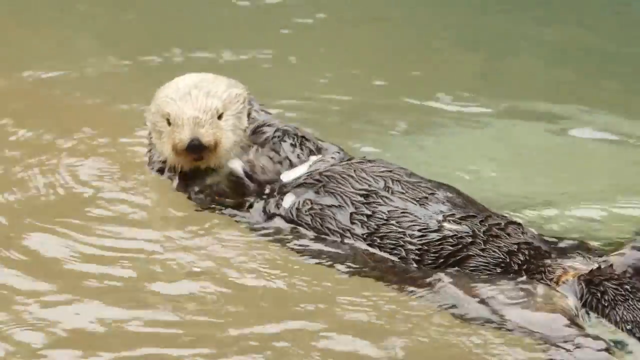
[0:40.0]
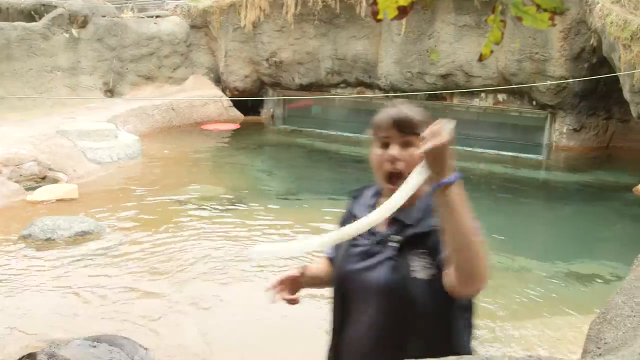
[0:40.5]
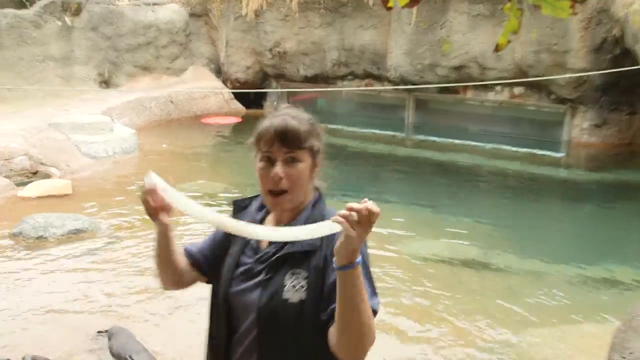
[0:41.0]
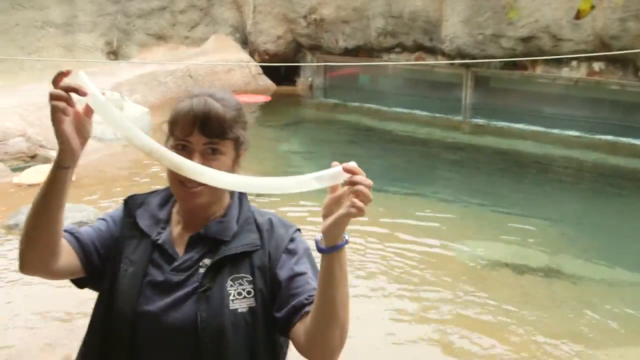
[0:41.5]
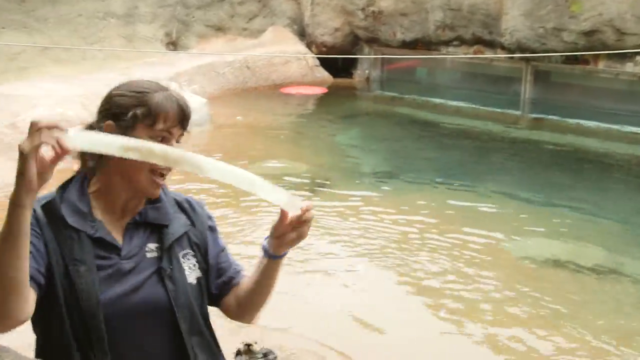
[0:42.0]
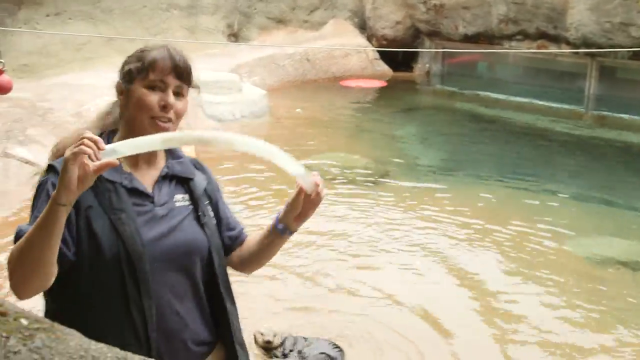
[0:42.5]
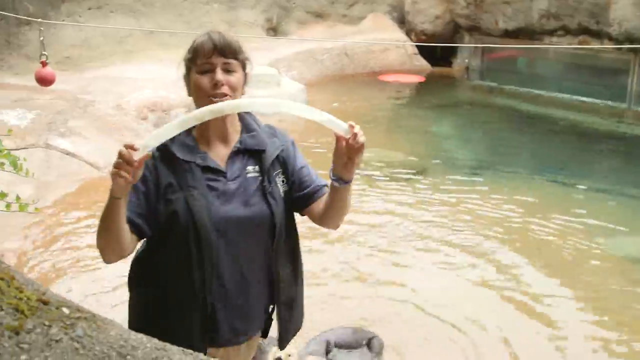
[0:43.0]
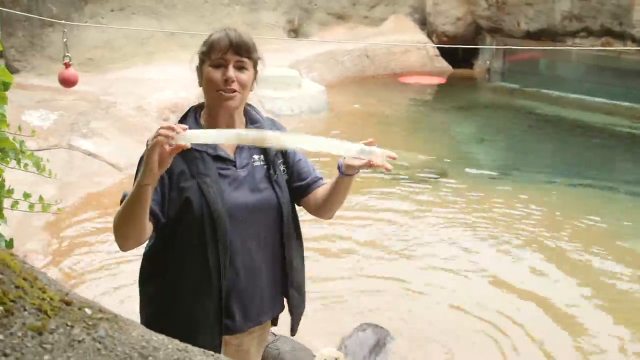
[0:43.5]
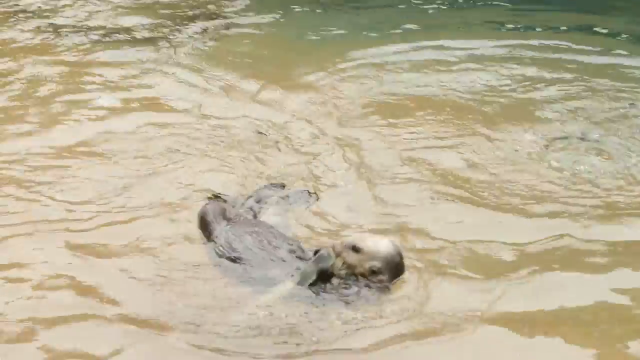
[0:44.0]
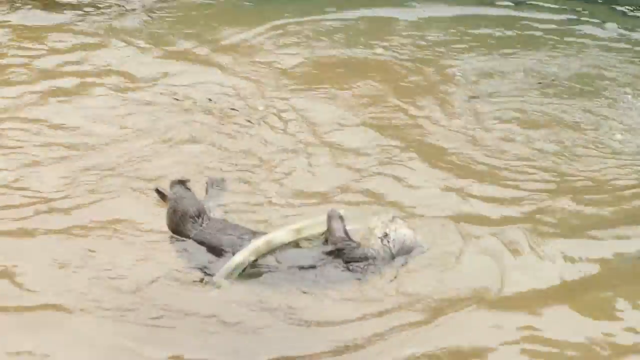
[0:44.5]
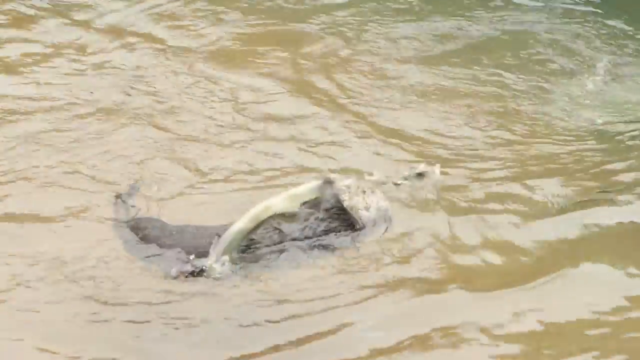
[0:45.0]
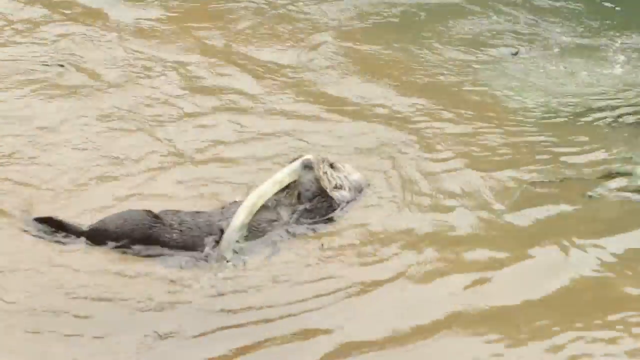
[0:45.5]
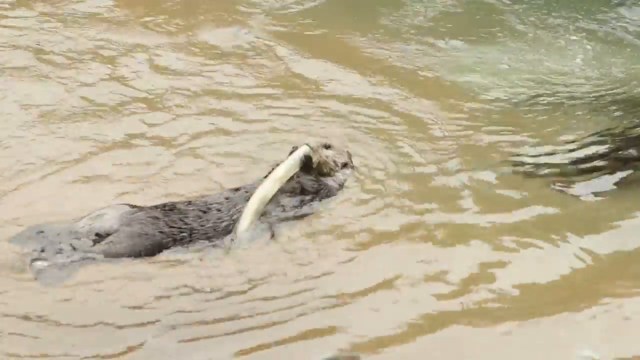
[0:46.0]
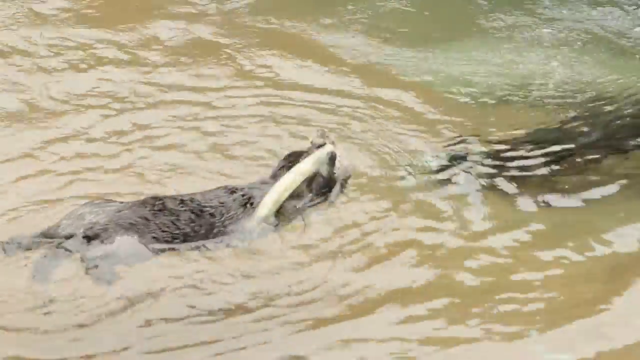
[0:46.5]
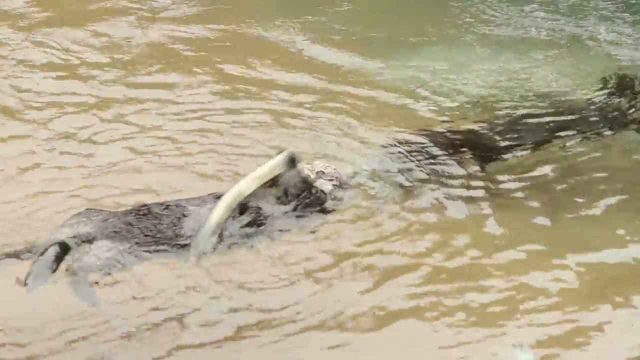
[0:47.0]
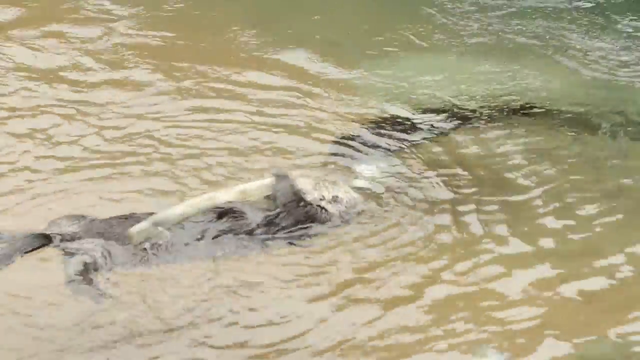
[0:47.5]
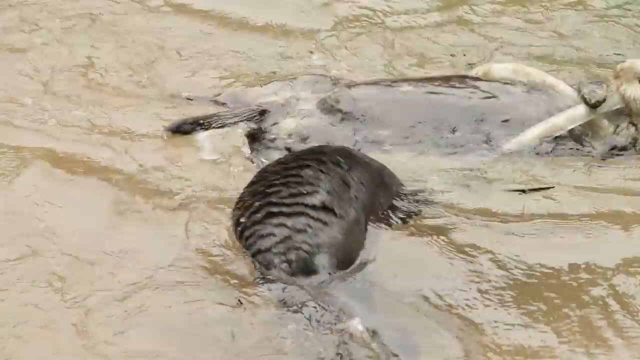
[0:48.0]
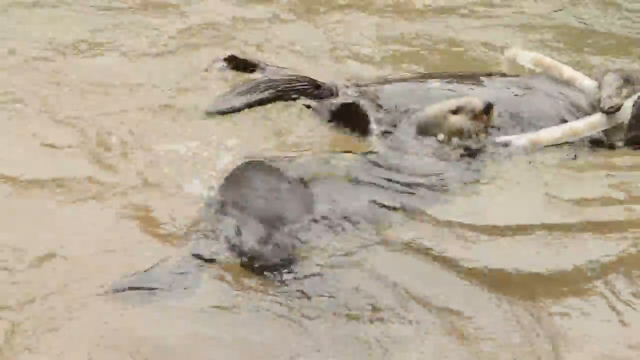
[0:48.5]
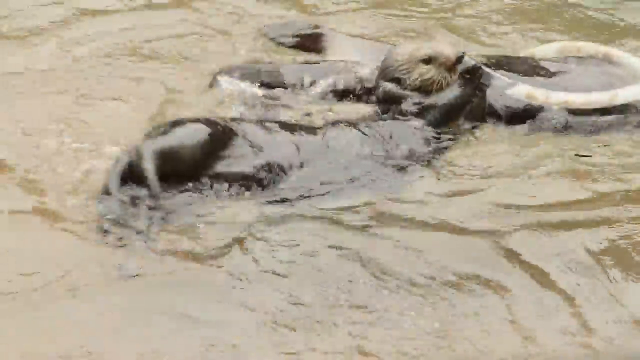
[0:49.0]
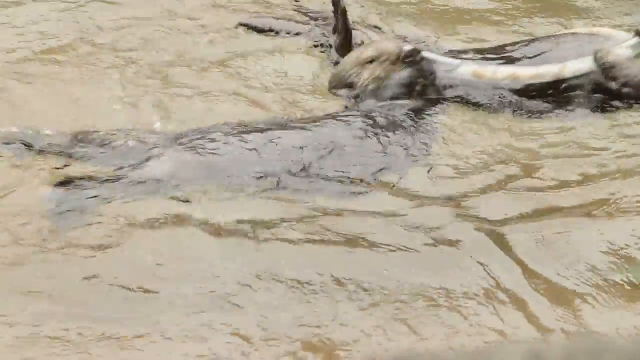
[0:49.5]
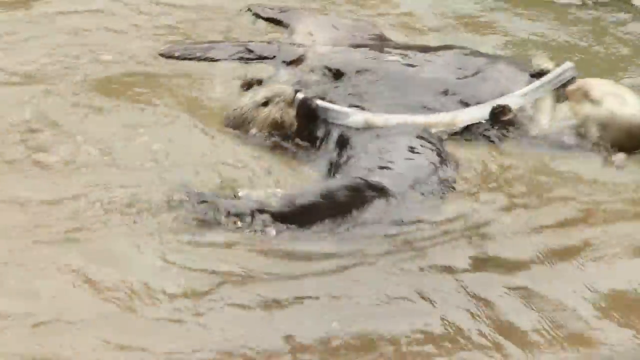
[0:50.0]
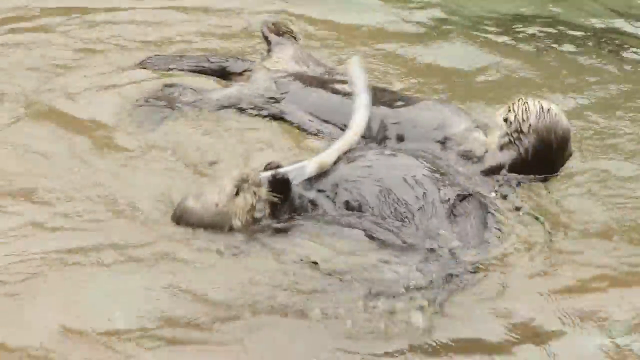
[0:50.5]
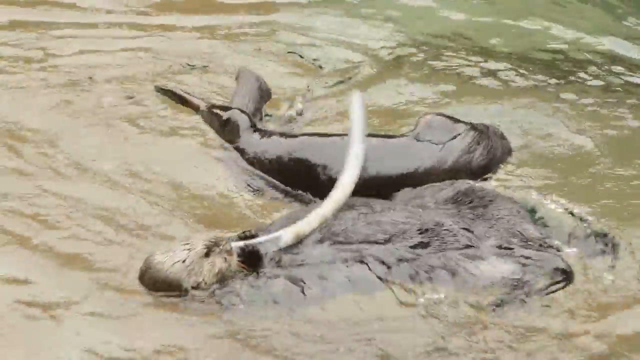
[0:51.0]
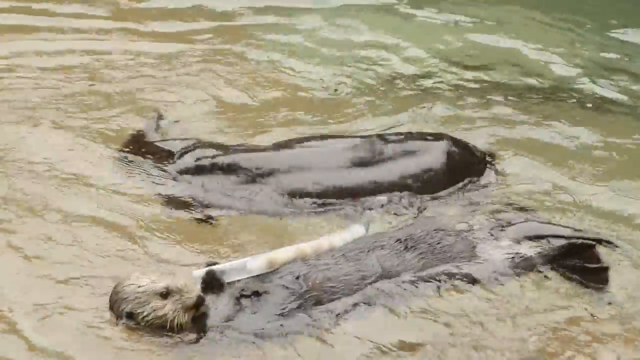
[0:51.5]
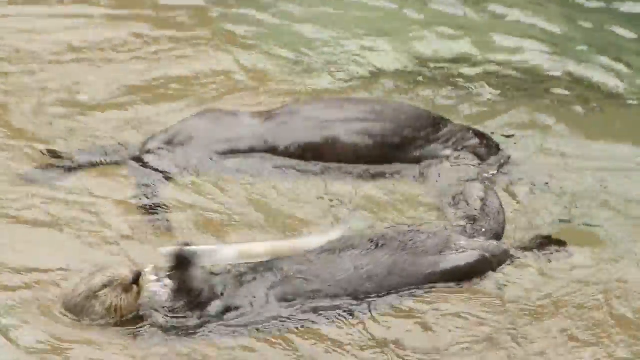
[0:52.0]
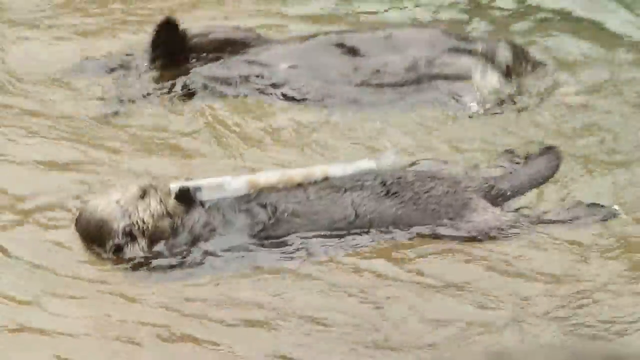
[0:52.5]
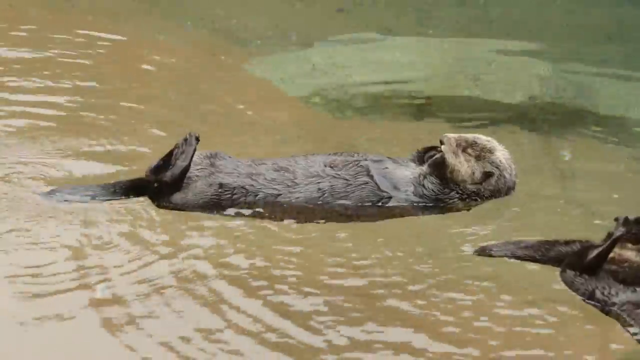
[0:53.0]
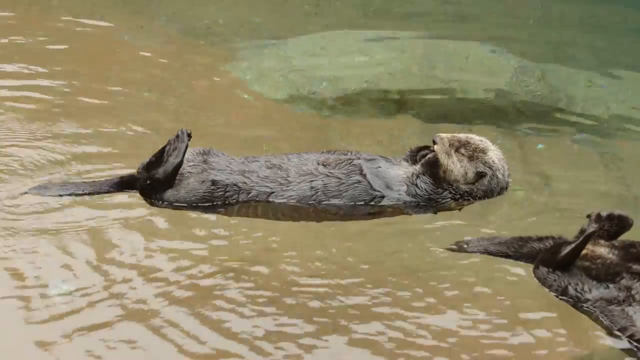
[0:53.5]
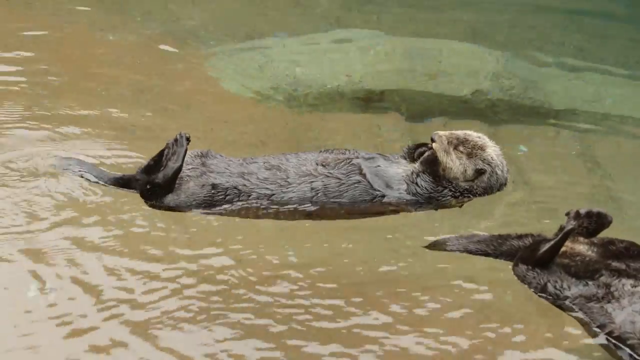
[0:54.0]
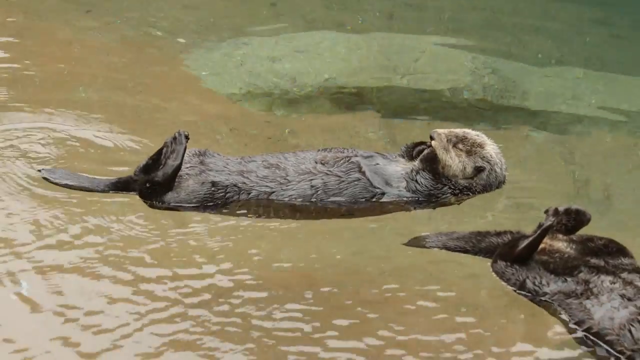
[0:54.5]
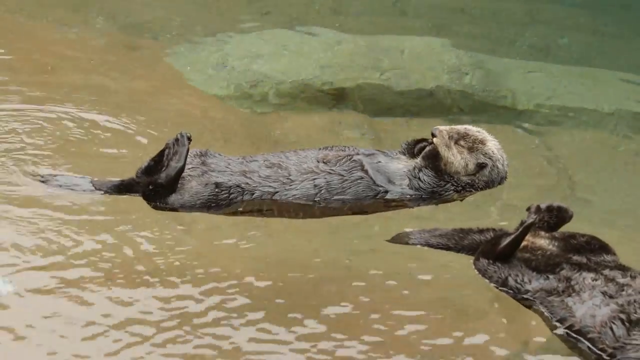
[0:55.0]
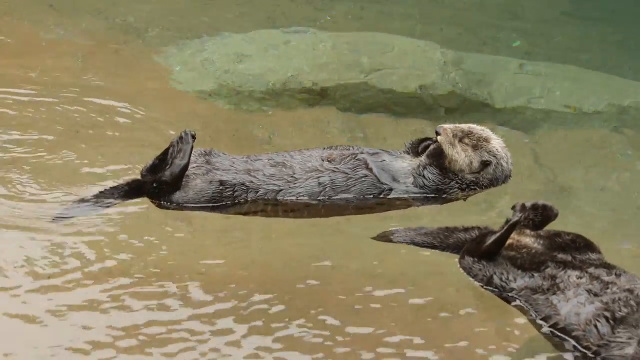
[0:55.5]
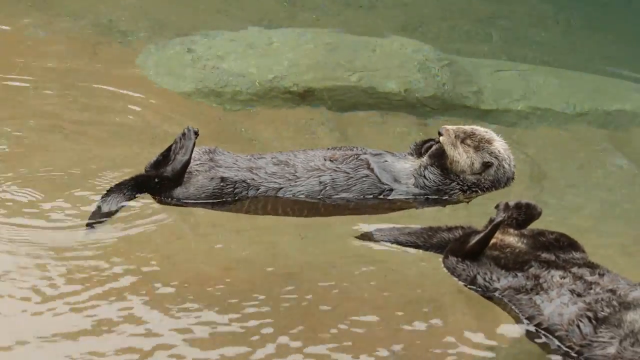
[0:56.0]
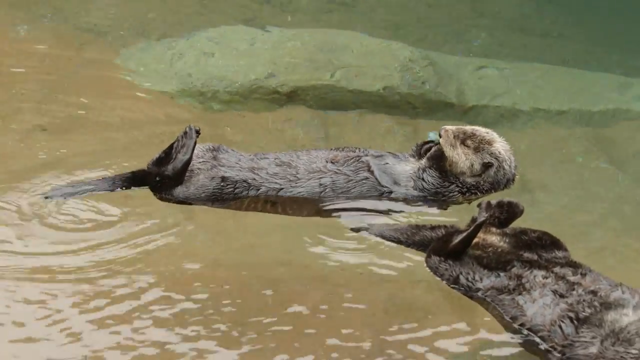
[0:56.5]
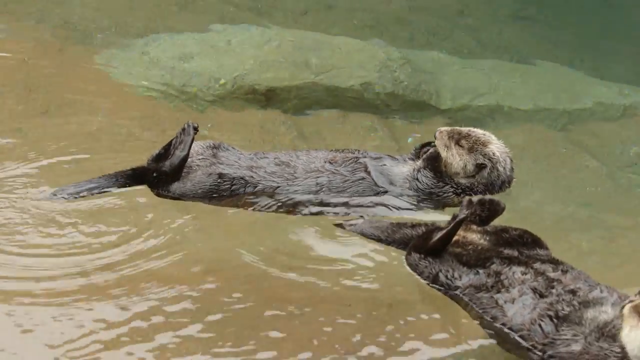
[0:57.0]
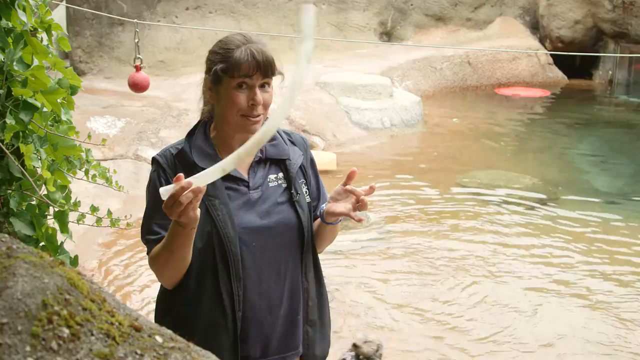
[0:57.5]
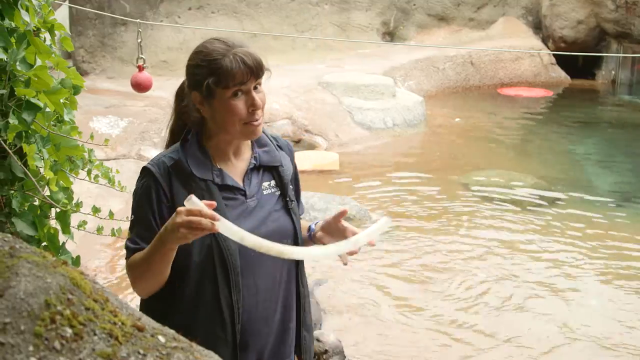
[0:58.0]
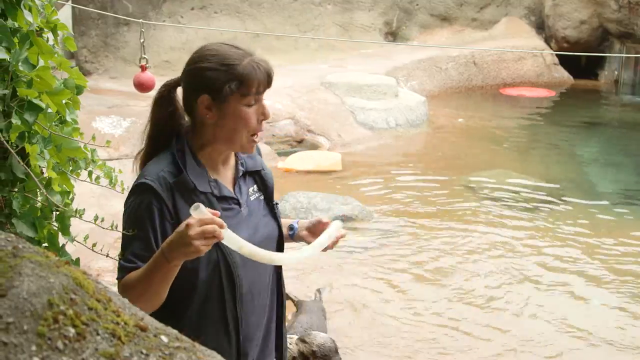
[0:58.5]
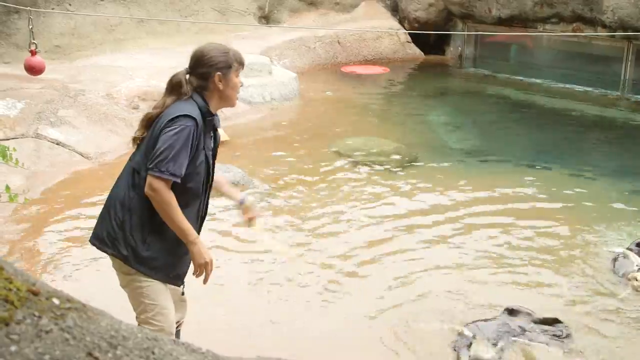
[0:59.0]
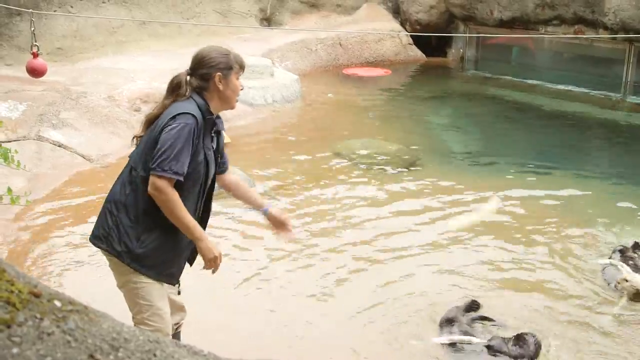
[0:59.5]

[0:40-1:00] The water is brown, and inside it is an otter that looks like it is playing and sitting on something. A woman holds something that looks like a pipe and gives it to the otter, and they look like they are fighting for it as they eat. The woman seems to be facing the camera and describing something. The otters, turning the water brown, balance on the water and look up at the sky as they eat. The woman in the black jacket stands beside them, describing the scene.